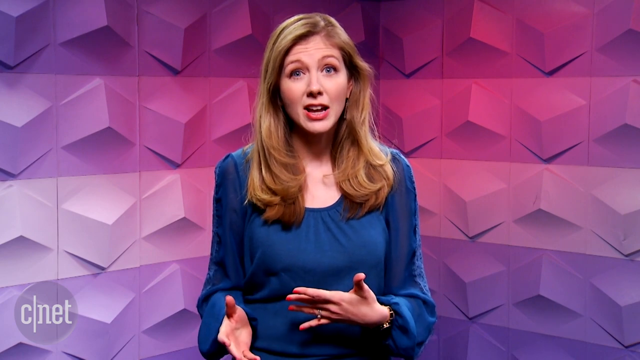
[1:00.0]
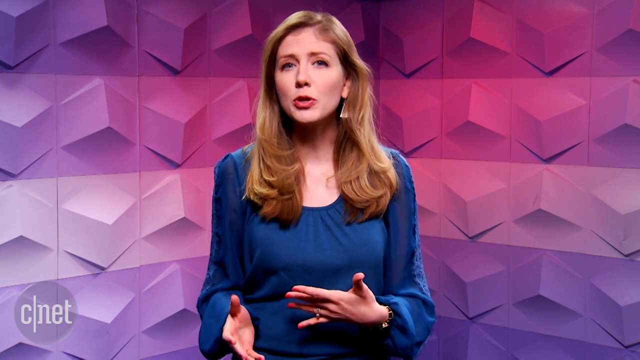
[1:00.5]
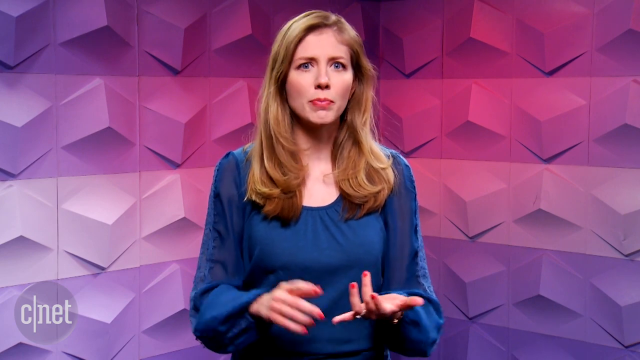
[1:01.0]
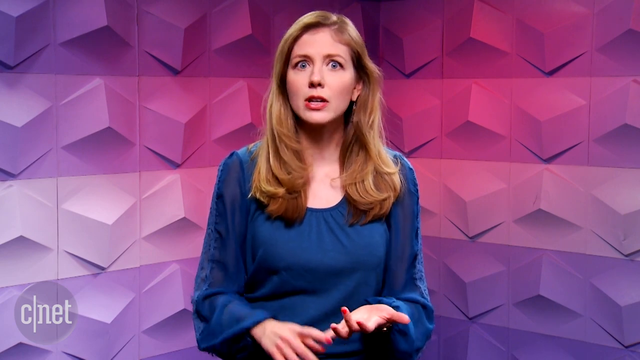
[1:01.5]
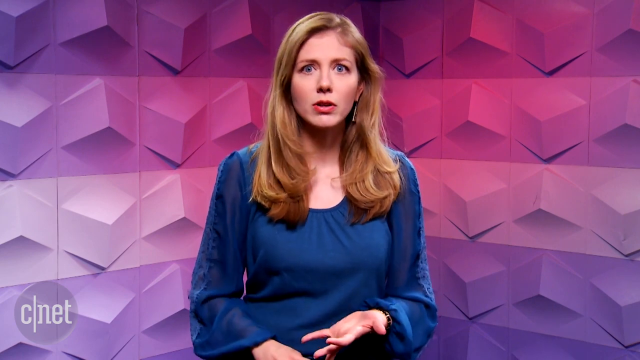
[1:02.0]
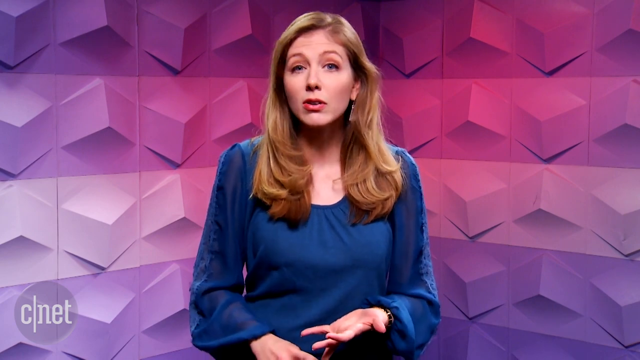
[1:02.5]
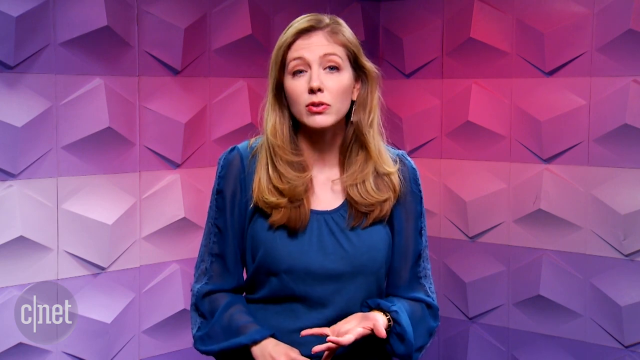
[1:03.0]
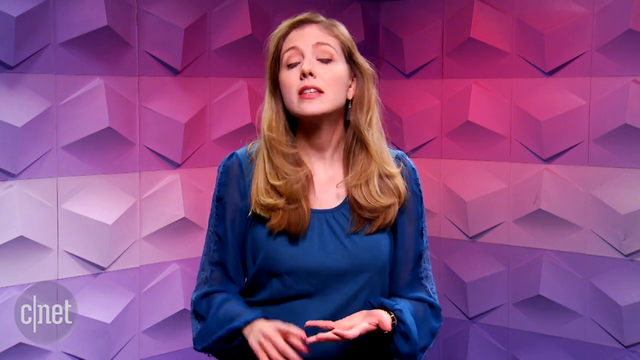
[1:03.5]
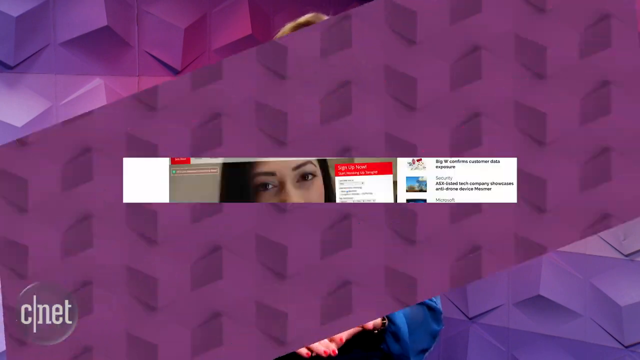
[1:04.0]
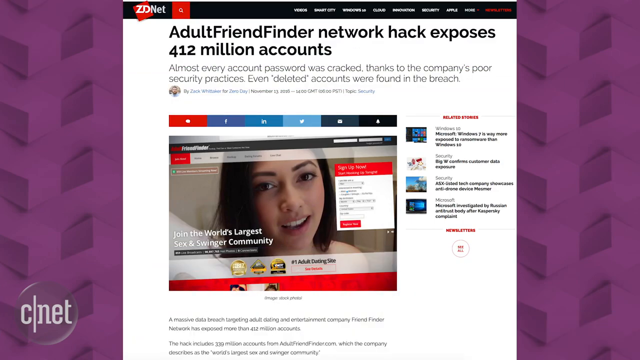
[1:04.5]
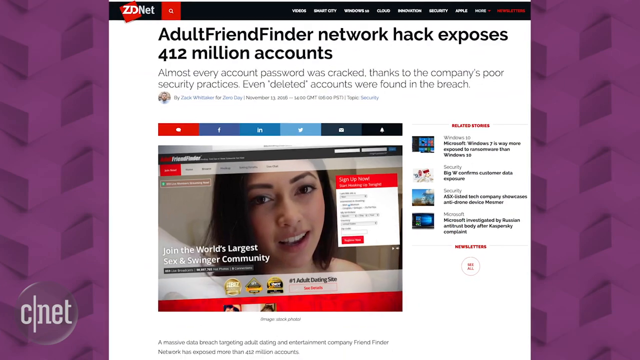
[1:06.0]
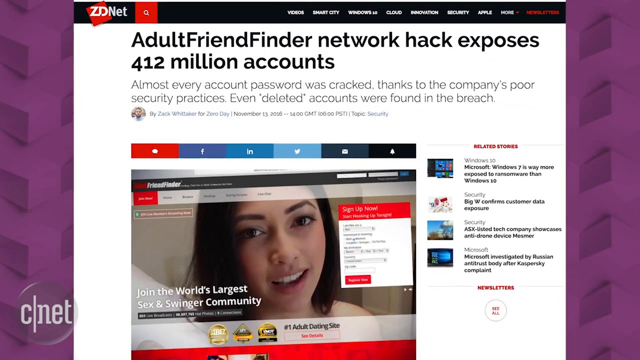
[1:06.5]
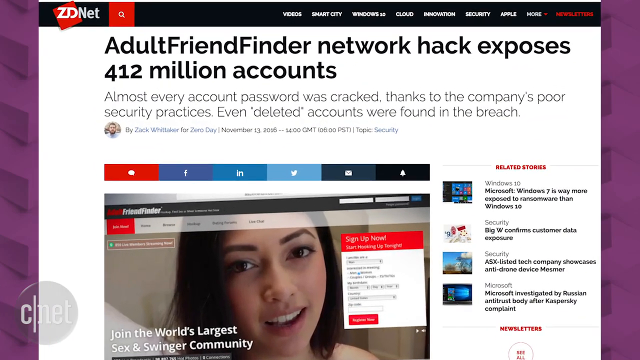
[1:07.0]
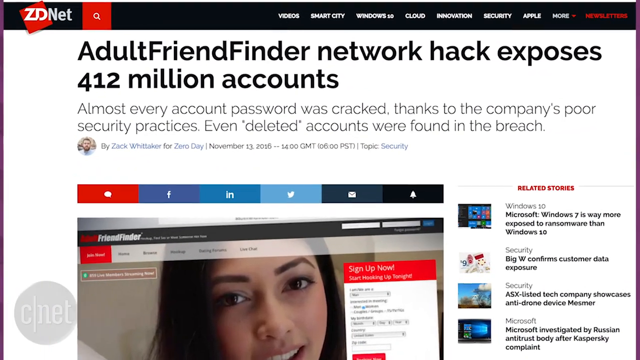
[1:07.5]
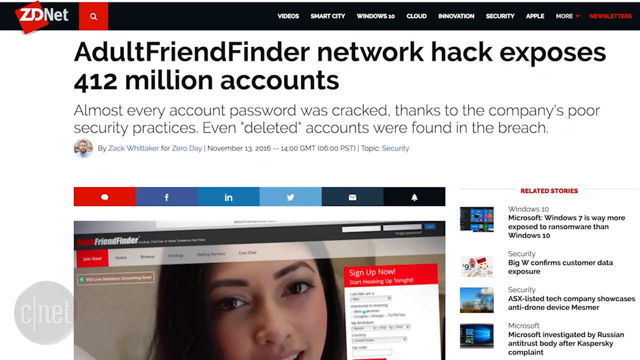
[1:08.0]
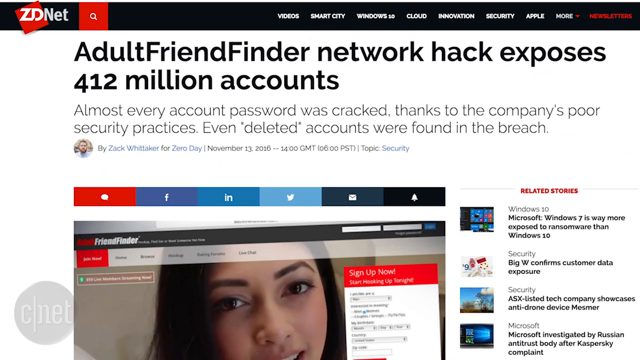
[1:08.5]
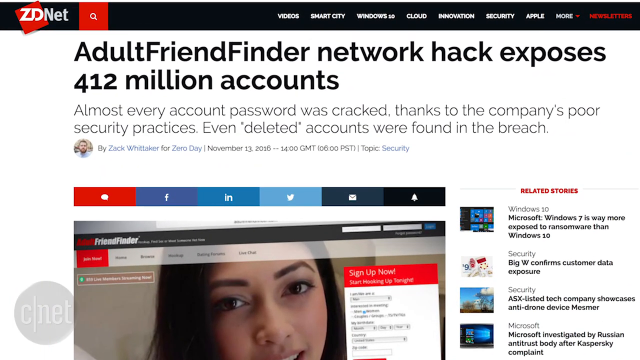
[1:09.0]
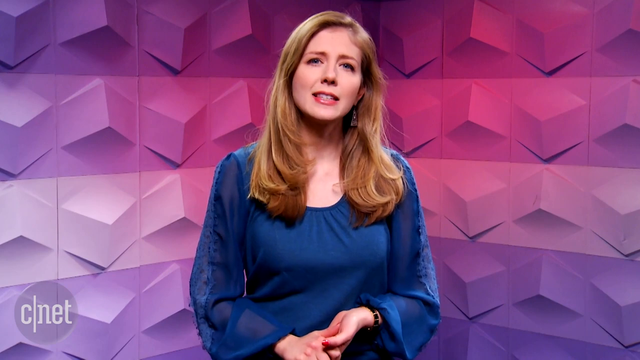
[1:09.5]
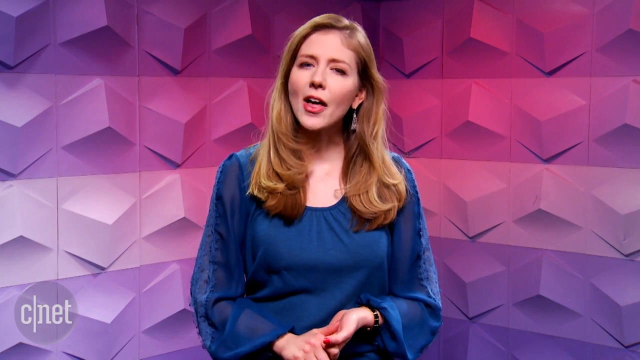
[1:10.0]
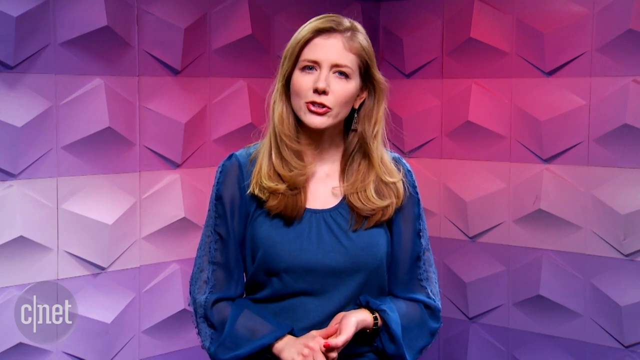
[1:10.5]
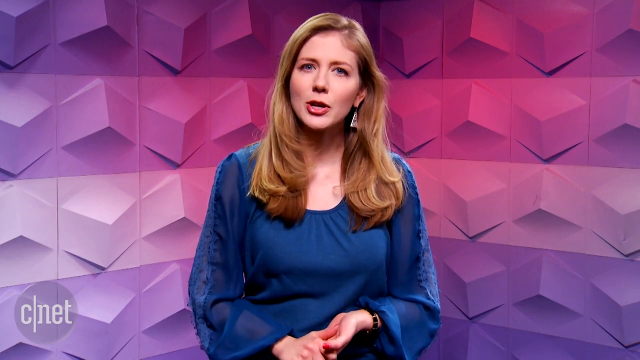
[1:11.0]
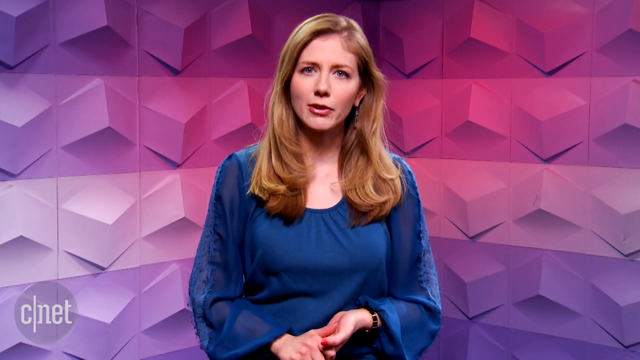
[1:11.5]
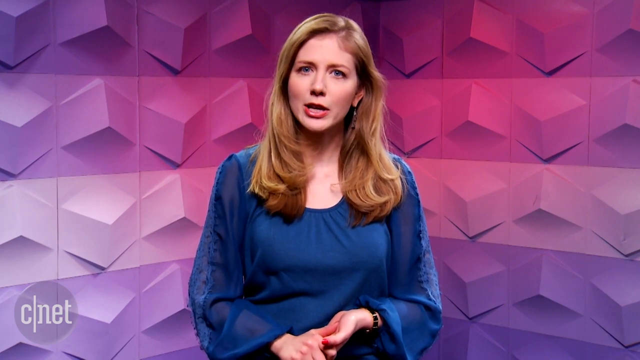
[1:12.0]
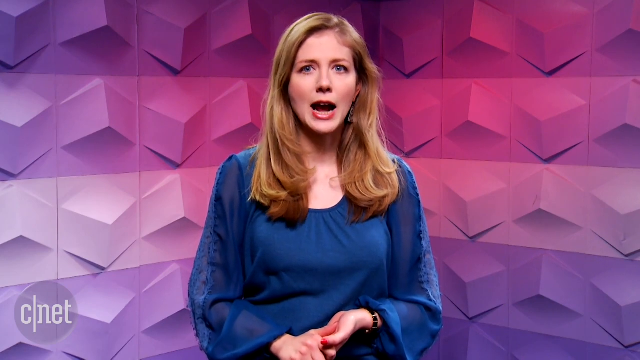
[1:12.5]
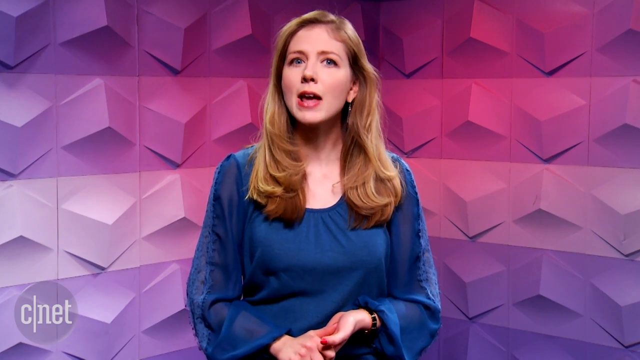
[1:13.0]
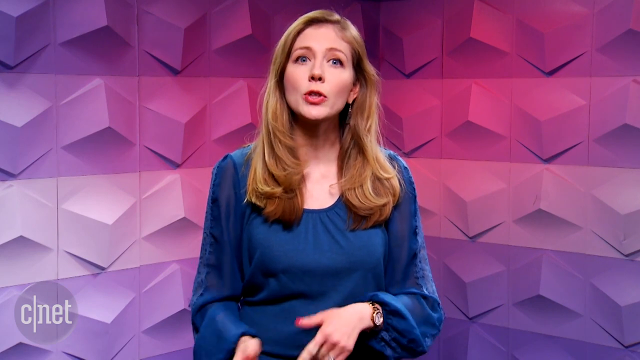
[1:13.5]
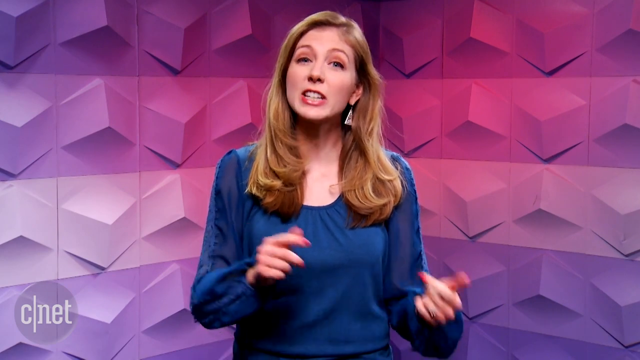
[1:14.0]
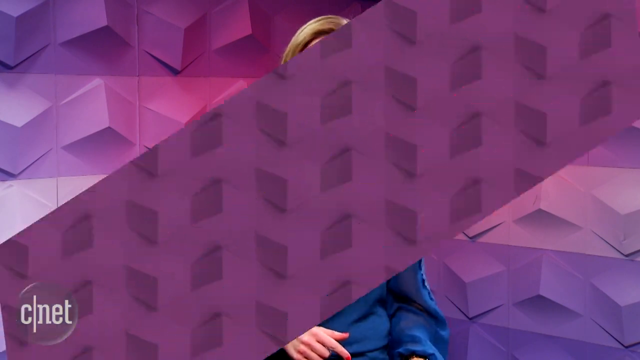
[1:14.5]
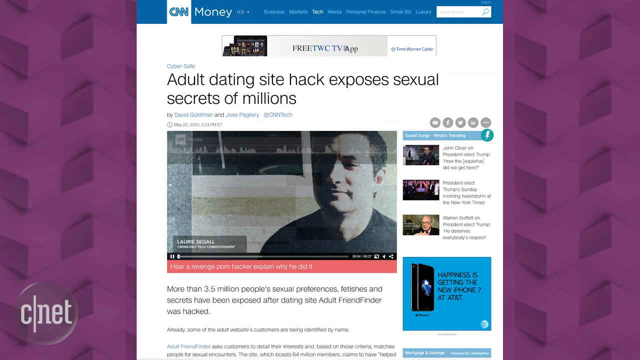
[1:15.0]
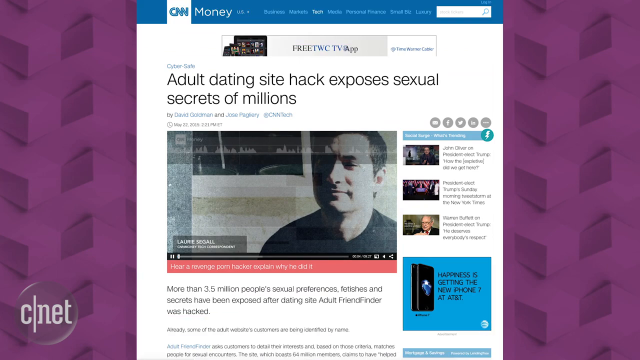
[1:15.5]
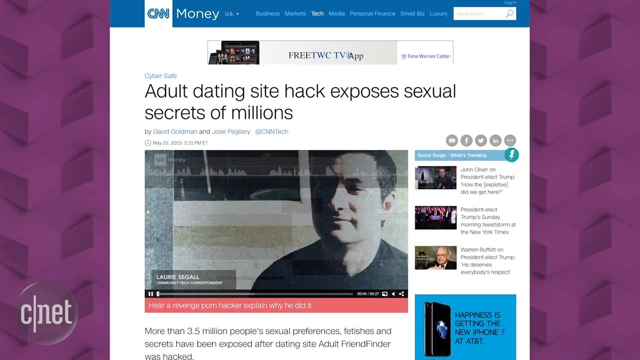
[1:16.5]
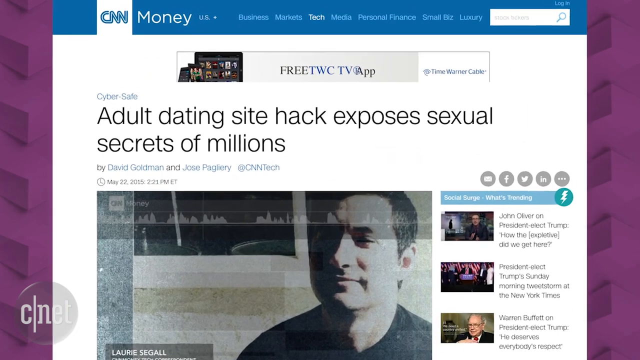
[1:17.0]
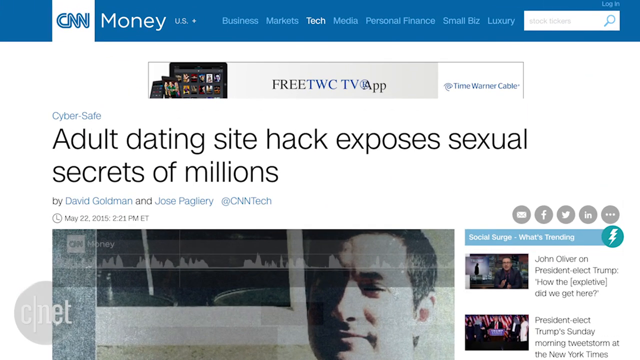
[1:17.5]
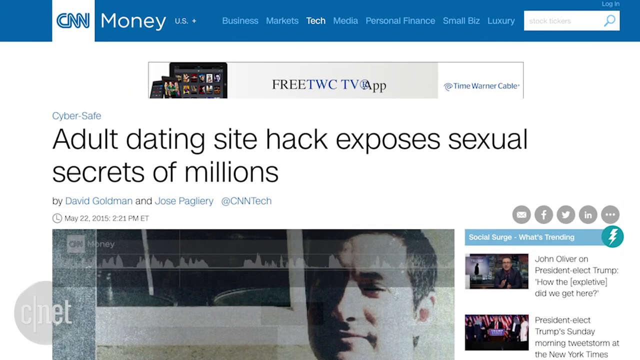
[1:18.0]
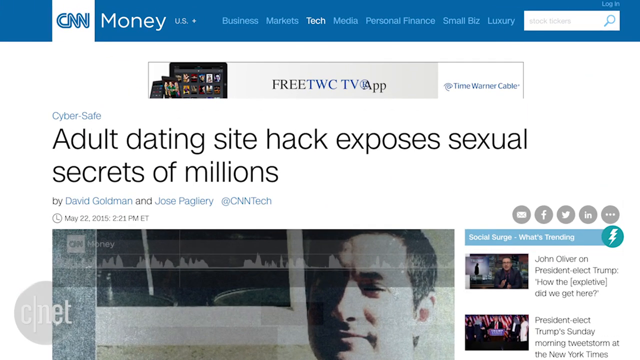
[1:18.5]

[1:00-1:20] Bridget uses hand gestures, pointing her fingers here and there. The video zooms in on a CNN article about an adult dating site that exposed the sexual secrets of millions, and Bridget looks shocked. Text then reads "almost every account password was cracked thanks to the company's poor security practices. Even deleted accounts were found in the breach." A money section is also visible on the CNN page. The background behind Bridget is a nice color.